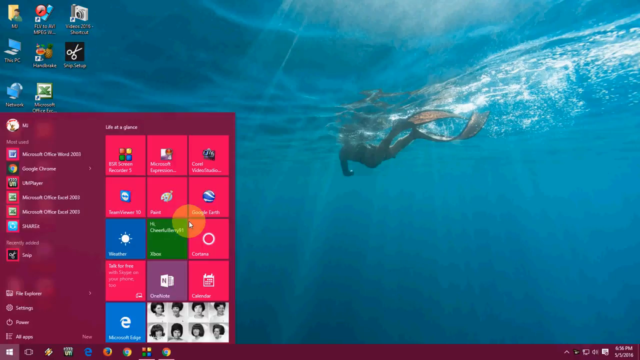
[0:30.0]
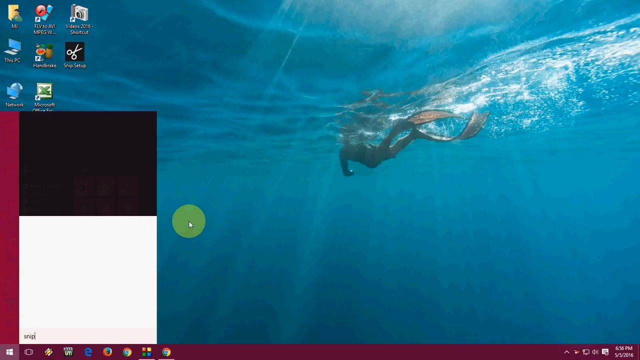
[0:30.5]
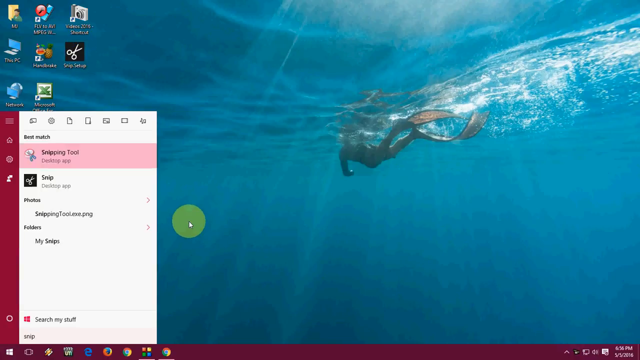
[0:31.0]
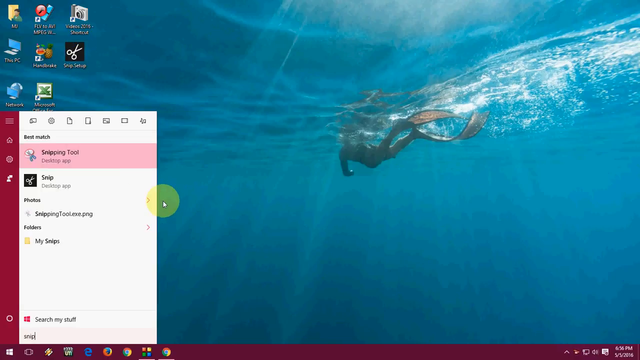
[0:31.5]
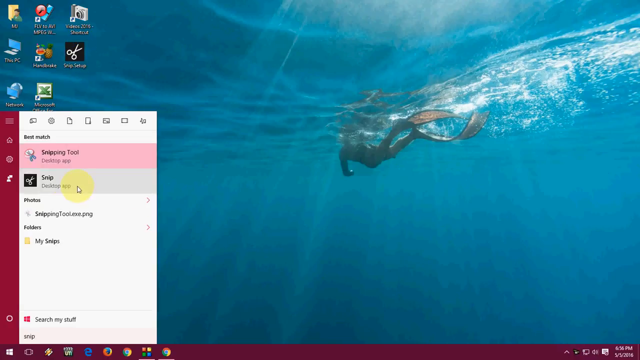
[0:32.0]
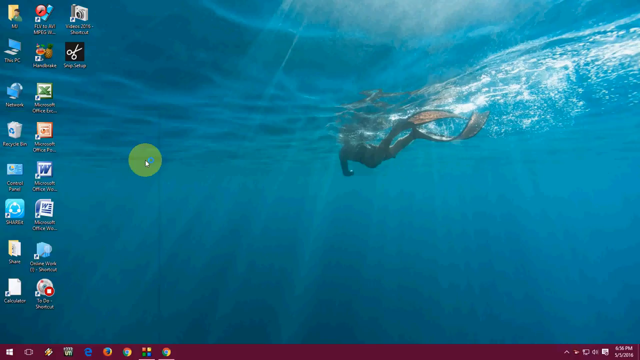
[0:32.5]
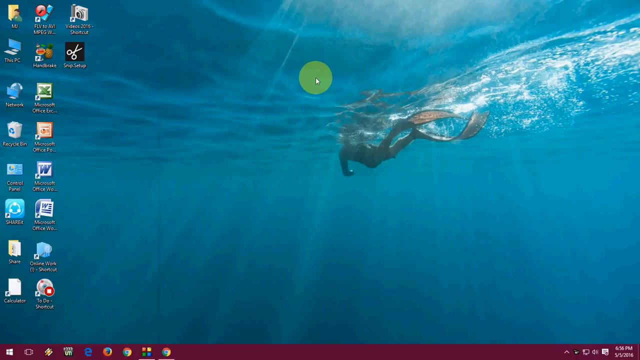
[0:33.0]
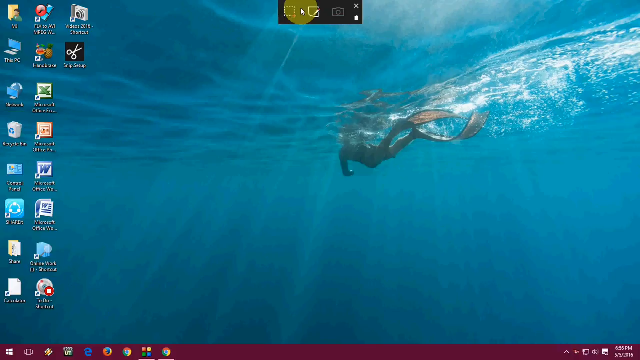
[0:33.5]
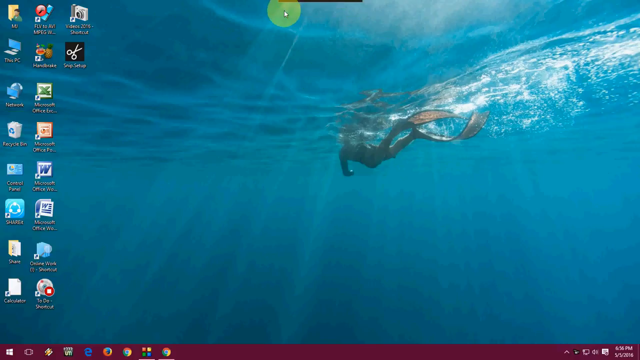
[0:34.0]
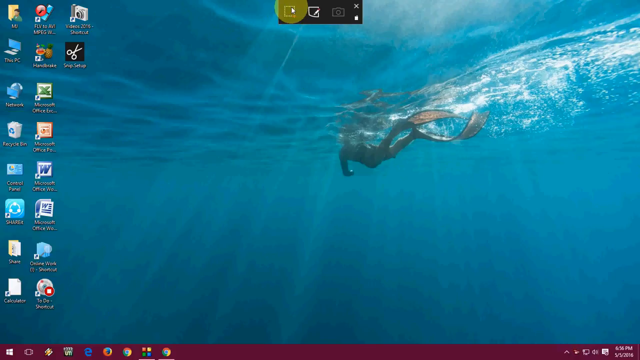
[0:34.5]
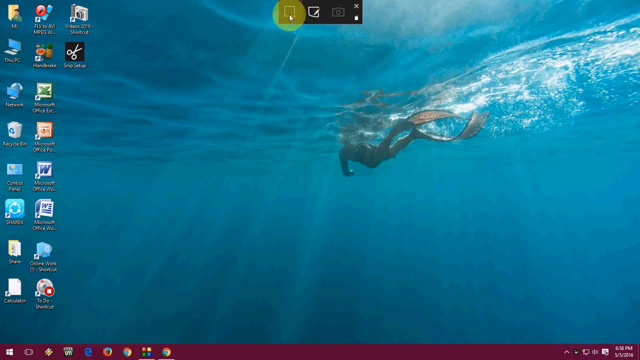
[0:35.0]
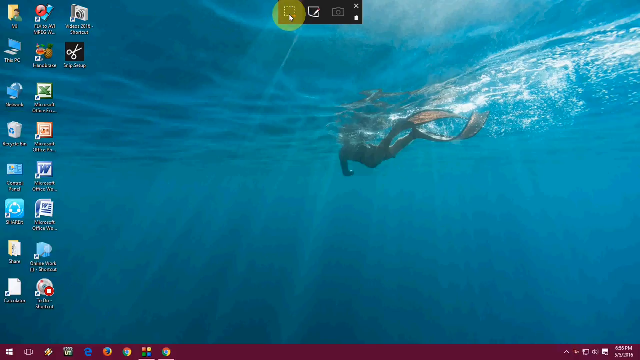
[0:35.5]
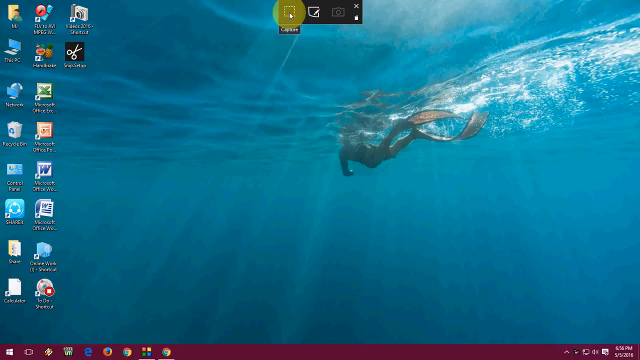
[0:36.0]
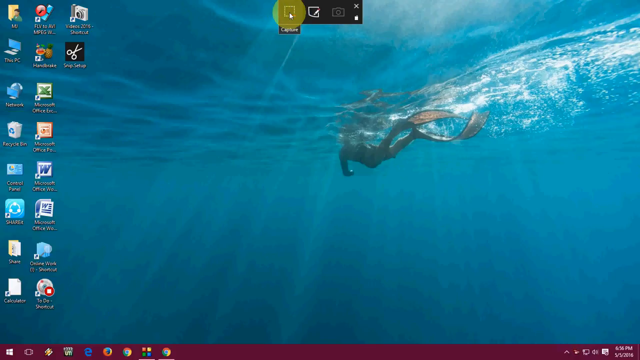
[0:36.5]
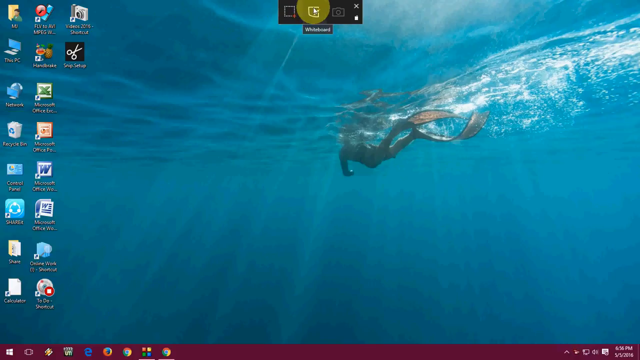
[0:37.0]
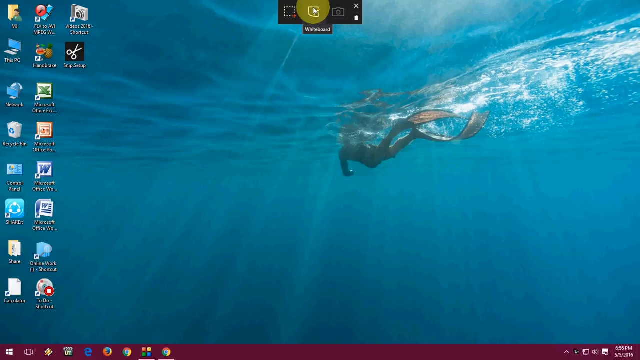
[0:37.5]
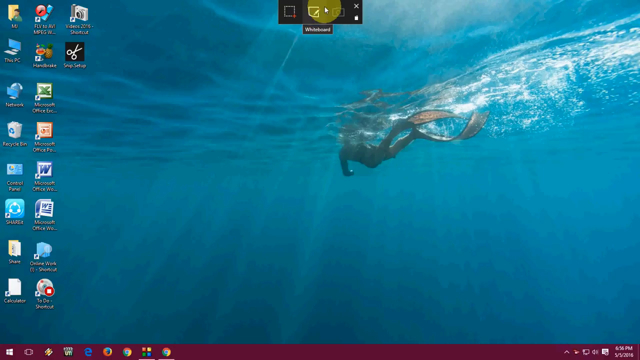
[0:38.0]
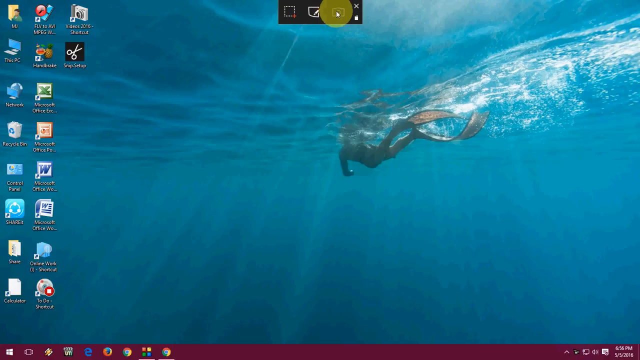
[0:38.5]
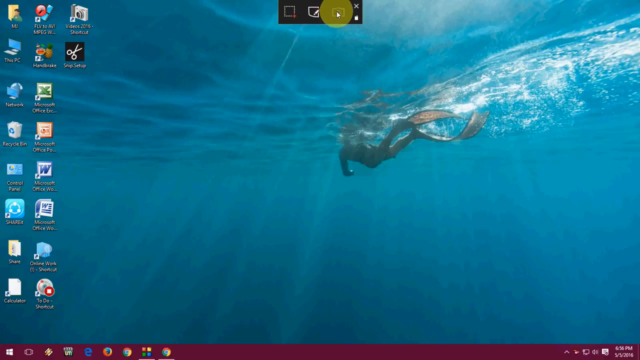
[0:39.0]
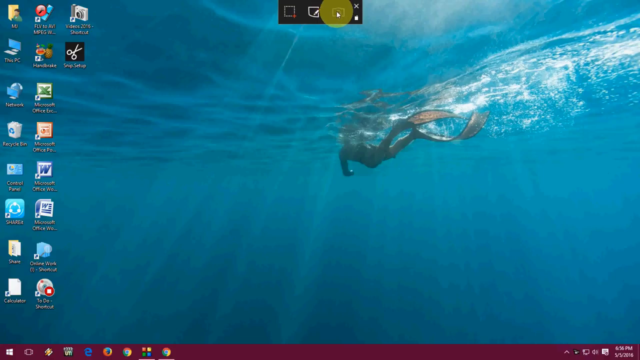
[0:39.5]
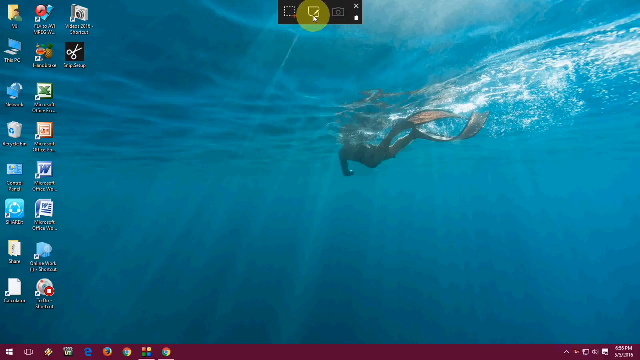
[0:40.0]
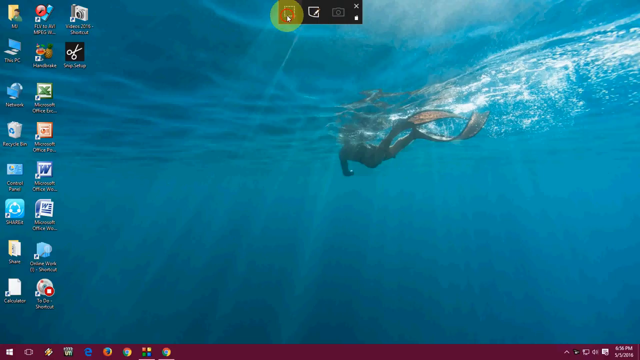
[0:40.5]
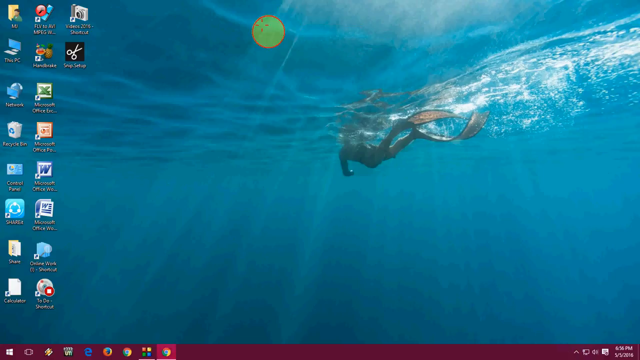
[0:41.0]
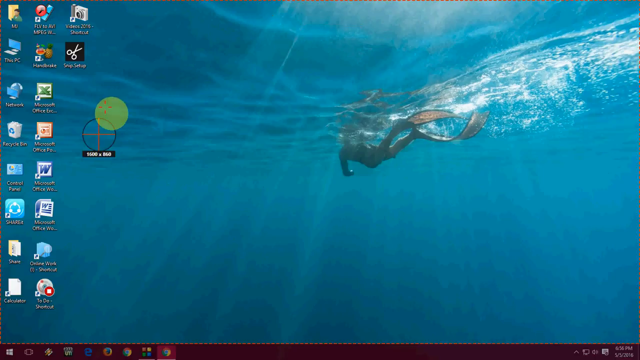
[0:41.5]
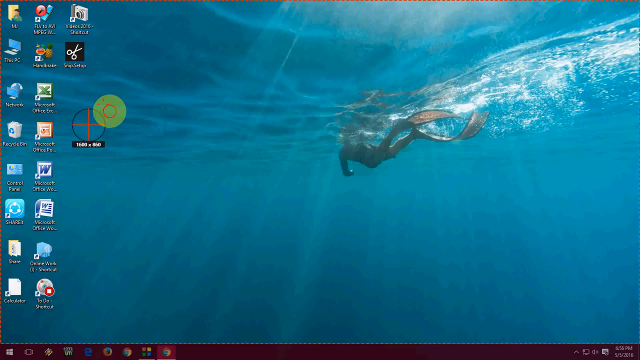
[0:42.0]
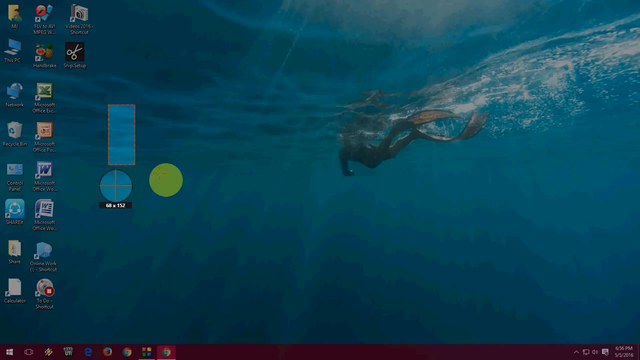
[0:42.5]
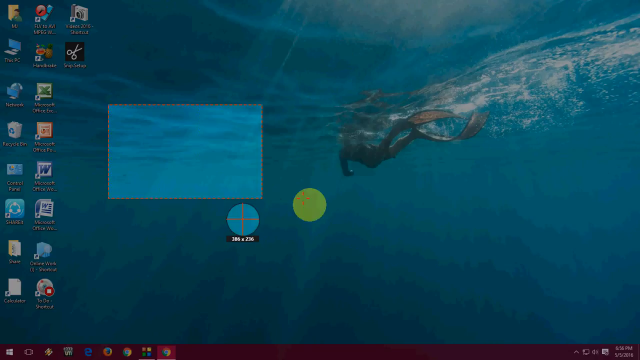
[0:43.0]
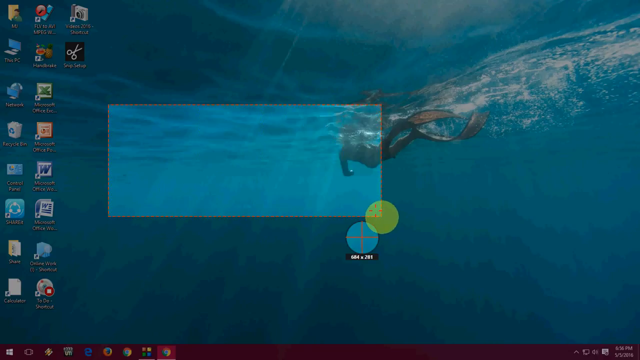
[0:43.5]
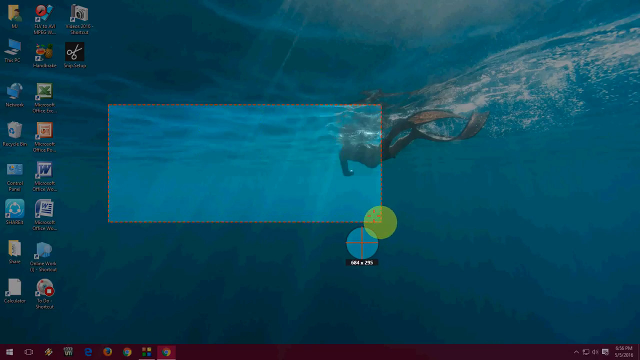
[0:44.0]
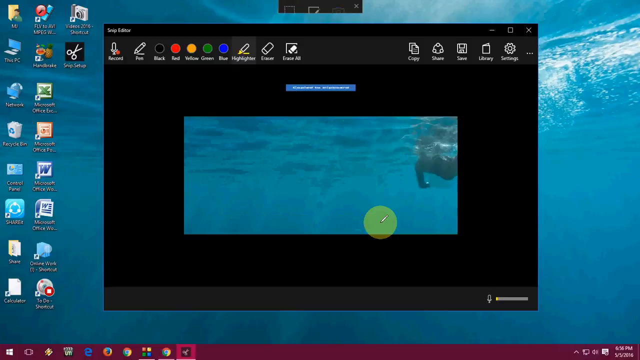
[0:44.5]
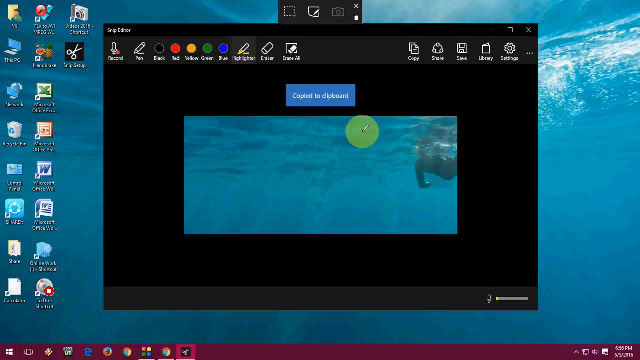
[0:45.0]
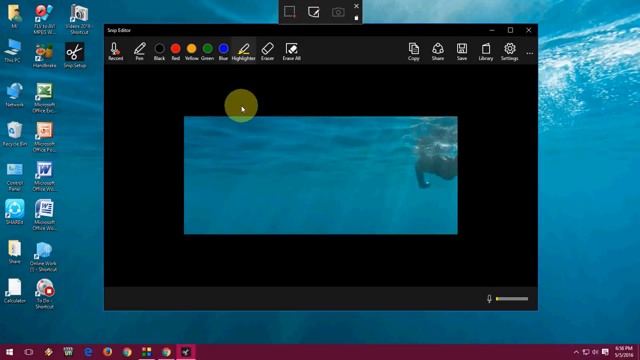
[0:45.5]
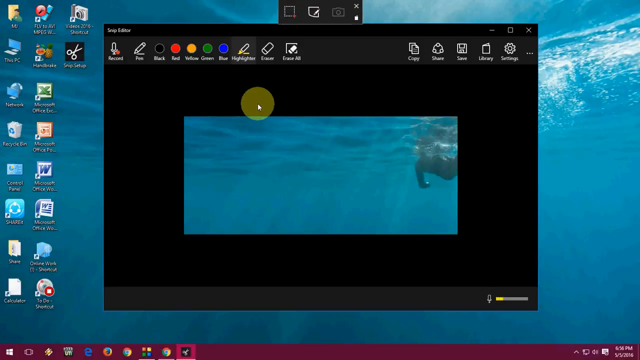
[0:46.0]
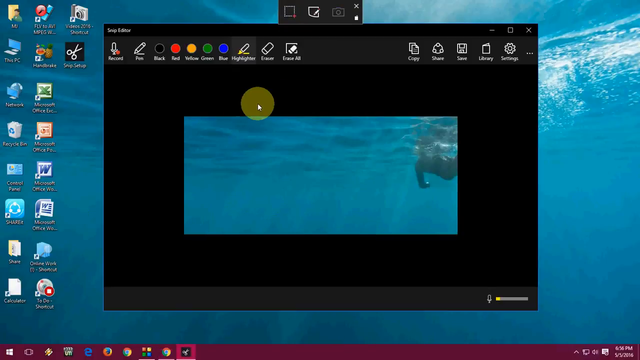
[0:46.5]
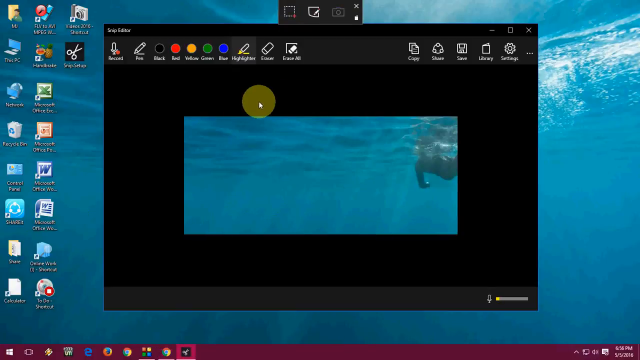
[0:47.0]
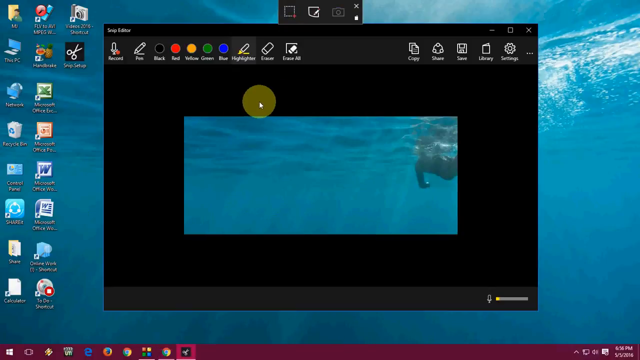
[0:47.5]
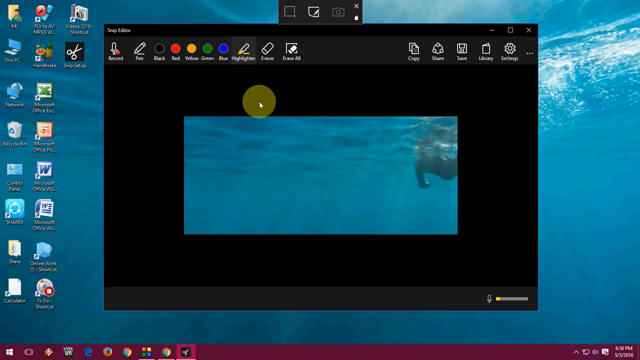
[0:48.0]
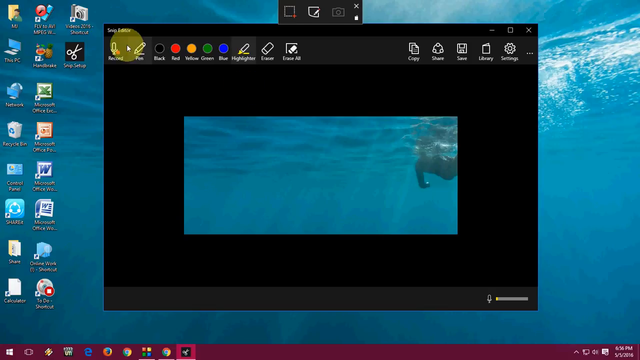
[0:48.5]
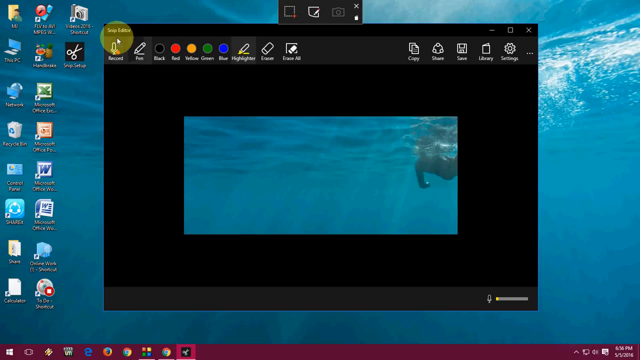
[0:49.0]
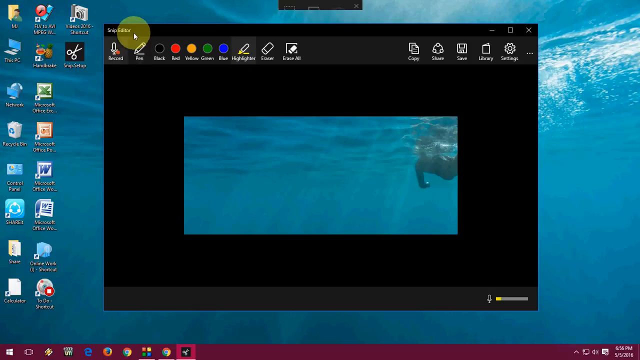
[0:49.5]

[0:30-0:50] The Windows button is clicked and the start menu opens. From it, the app Snip & Tool is opened, an app for making screen captures that are saved as images. Text and images can be put into the app, and the image can be edited after it is recorded.